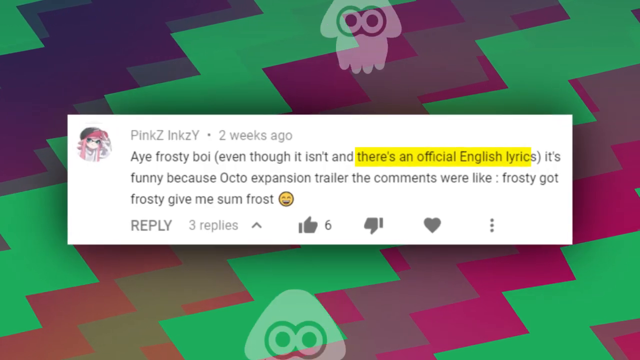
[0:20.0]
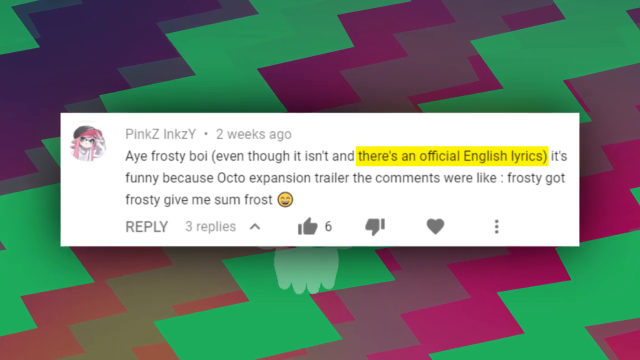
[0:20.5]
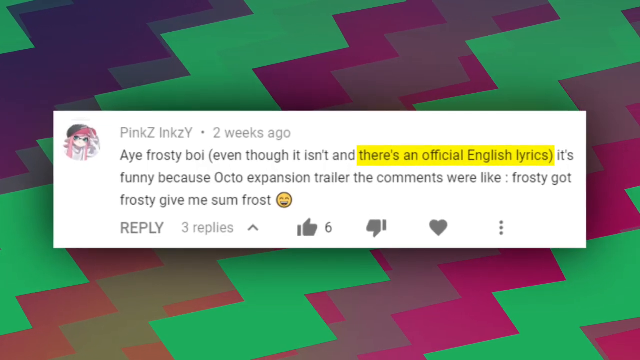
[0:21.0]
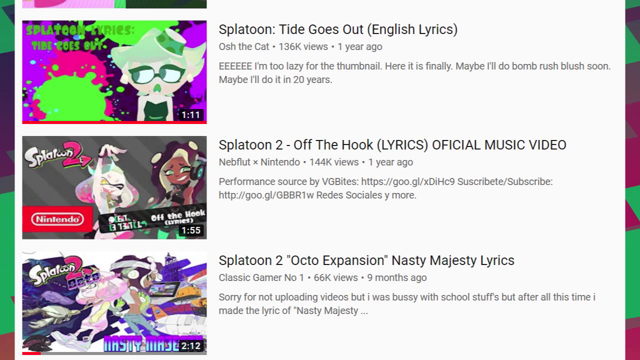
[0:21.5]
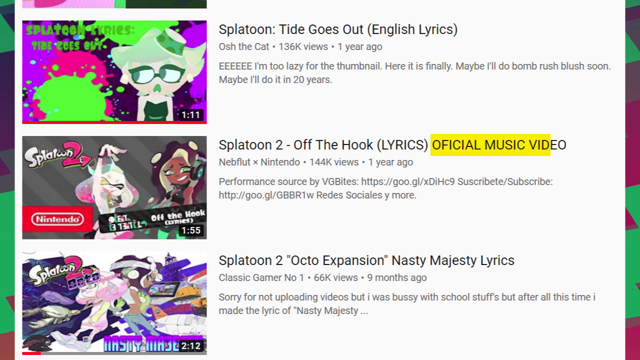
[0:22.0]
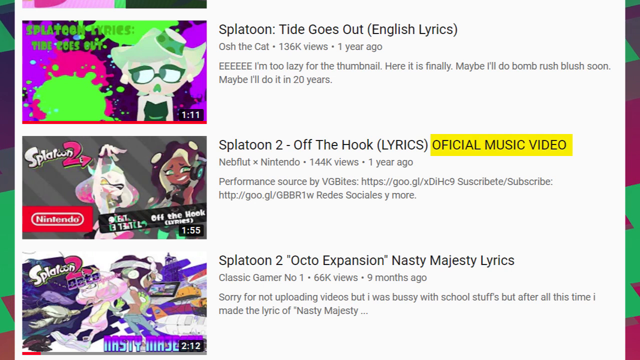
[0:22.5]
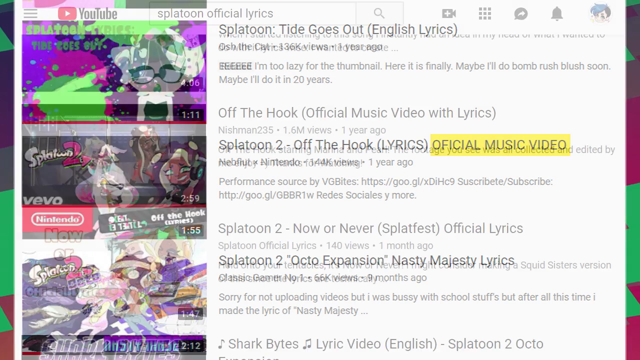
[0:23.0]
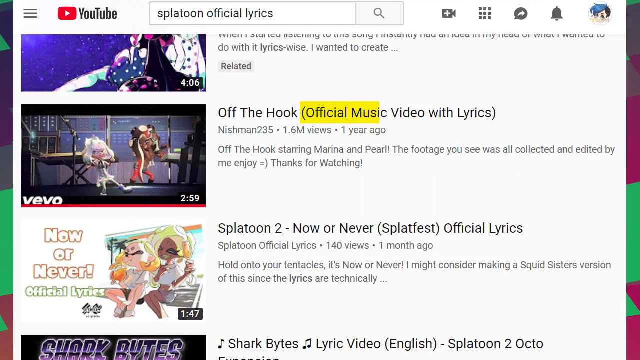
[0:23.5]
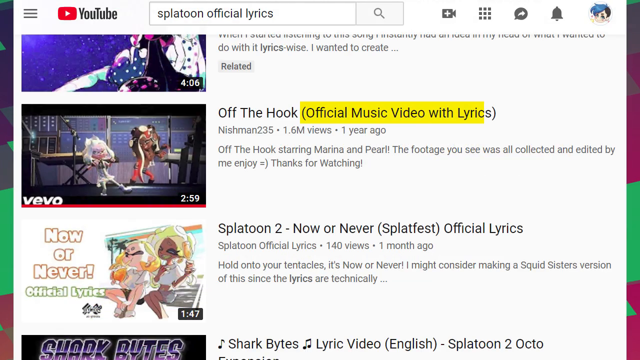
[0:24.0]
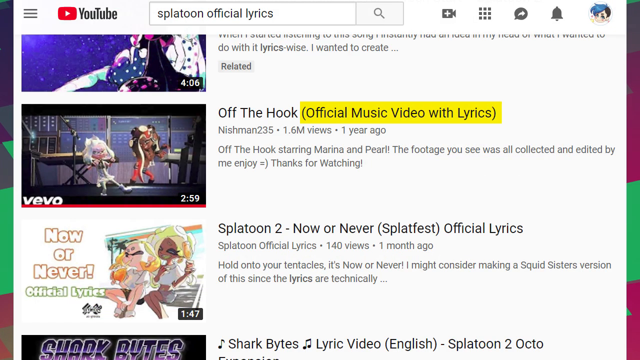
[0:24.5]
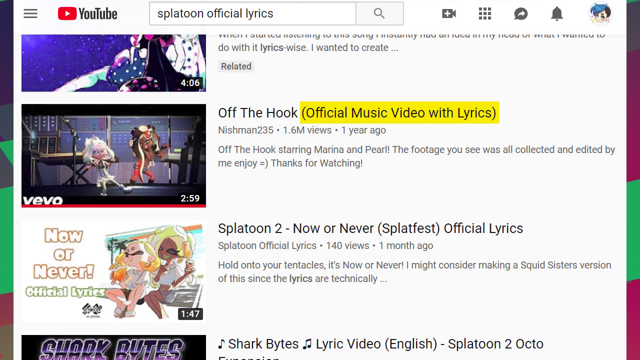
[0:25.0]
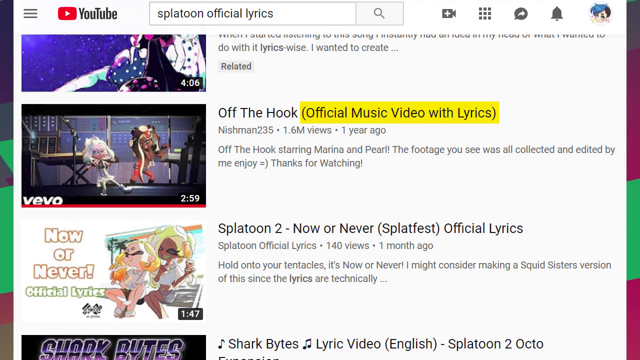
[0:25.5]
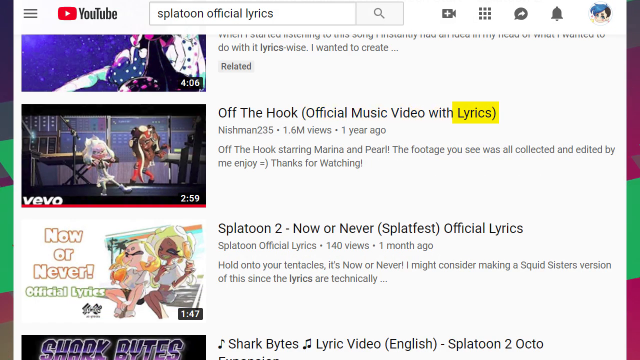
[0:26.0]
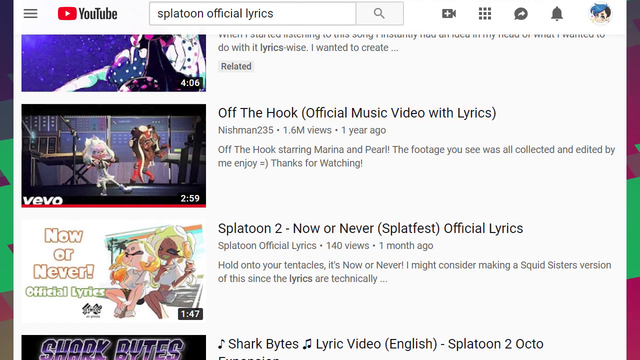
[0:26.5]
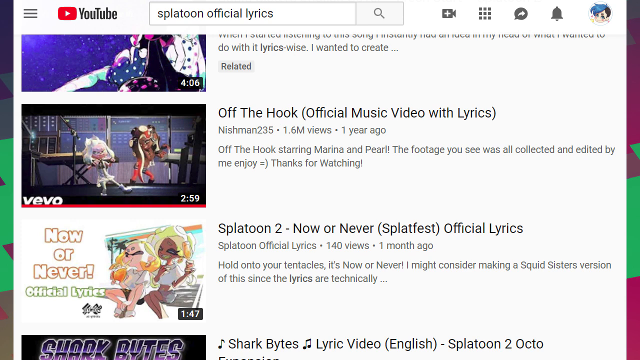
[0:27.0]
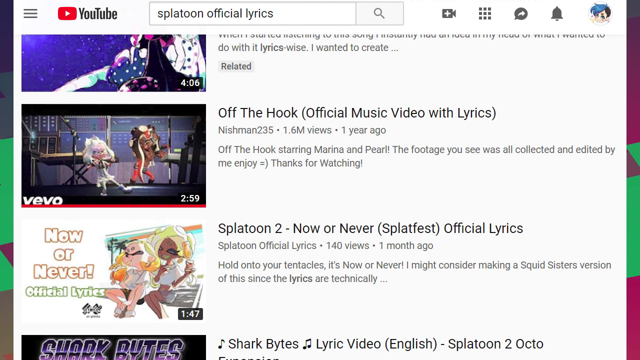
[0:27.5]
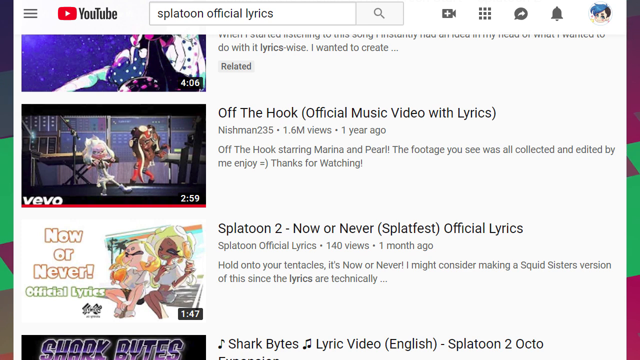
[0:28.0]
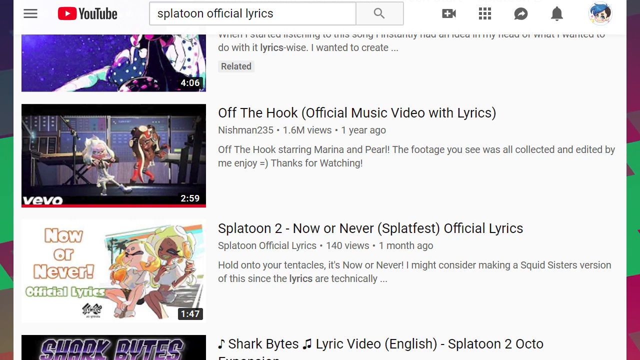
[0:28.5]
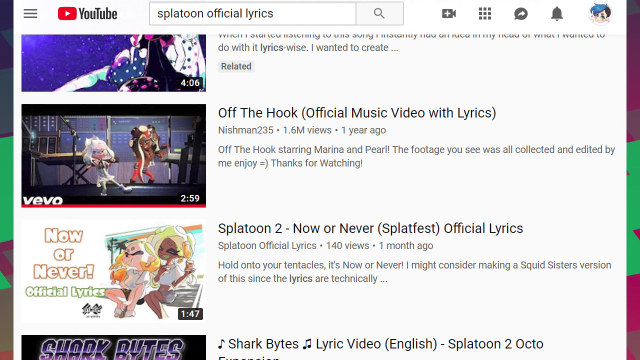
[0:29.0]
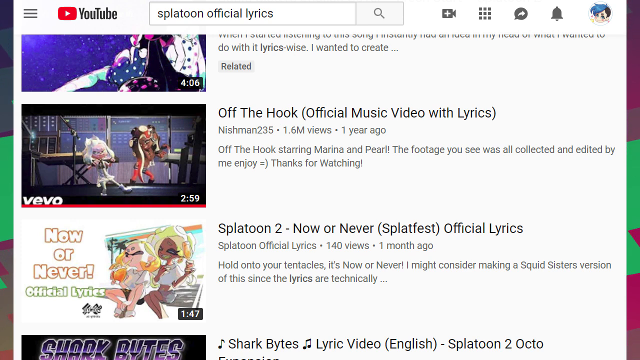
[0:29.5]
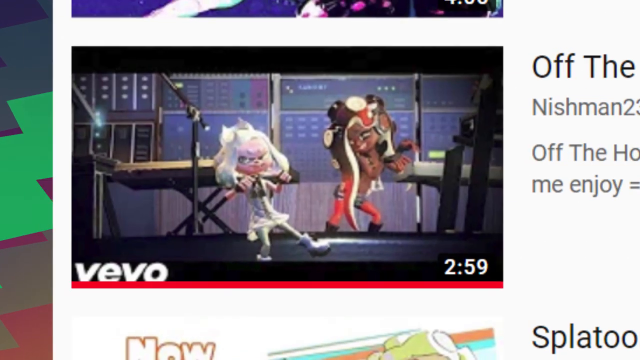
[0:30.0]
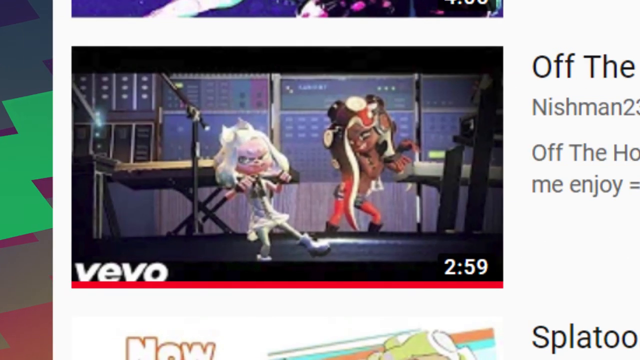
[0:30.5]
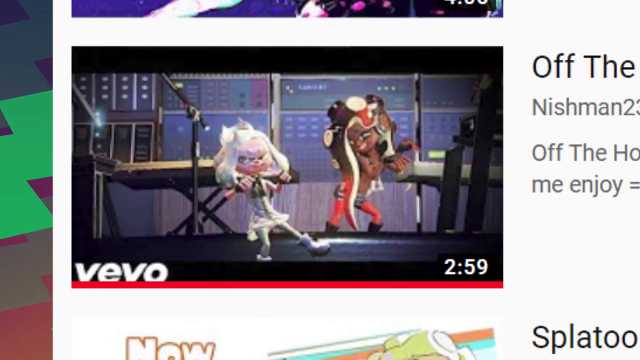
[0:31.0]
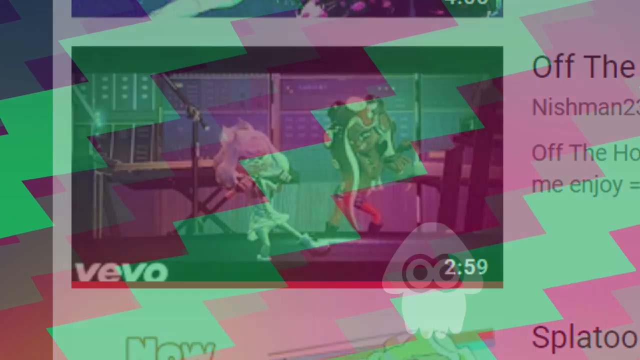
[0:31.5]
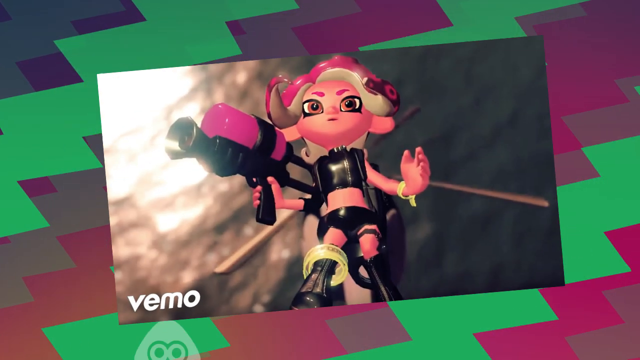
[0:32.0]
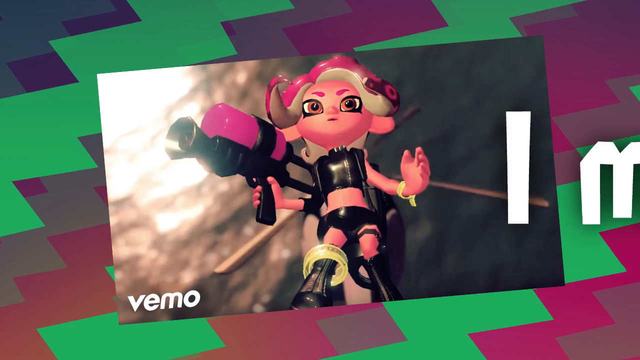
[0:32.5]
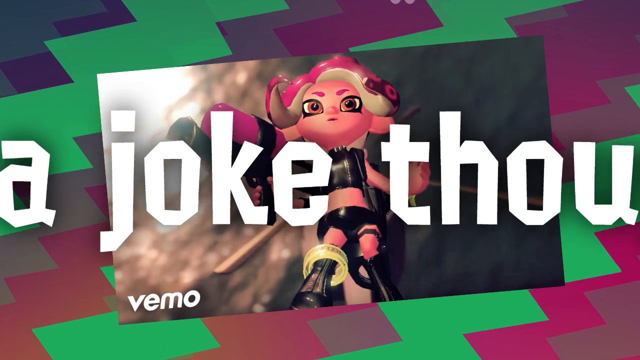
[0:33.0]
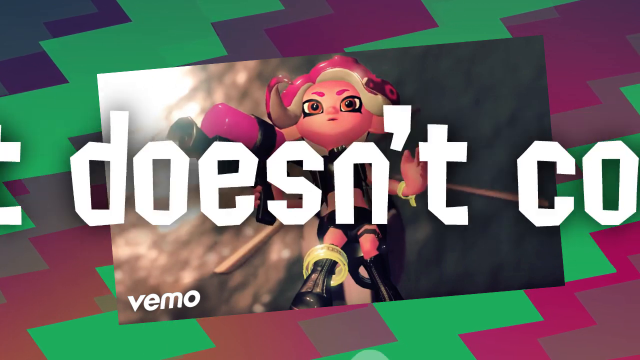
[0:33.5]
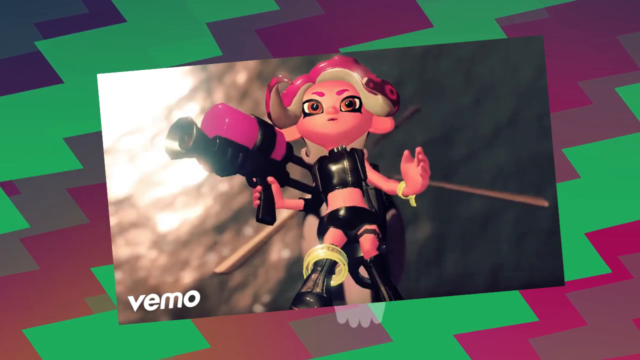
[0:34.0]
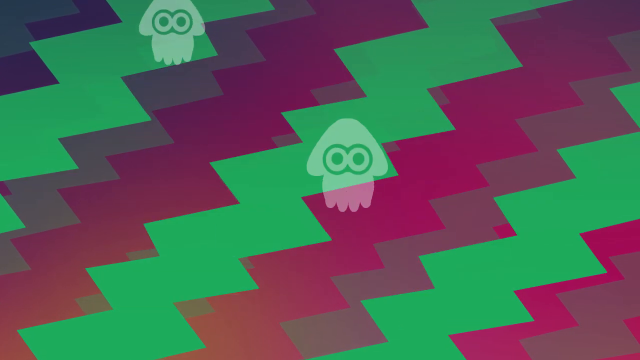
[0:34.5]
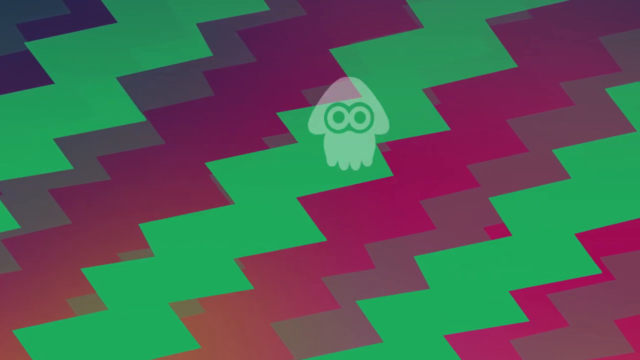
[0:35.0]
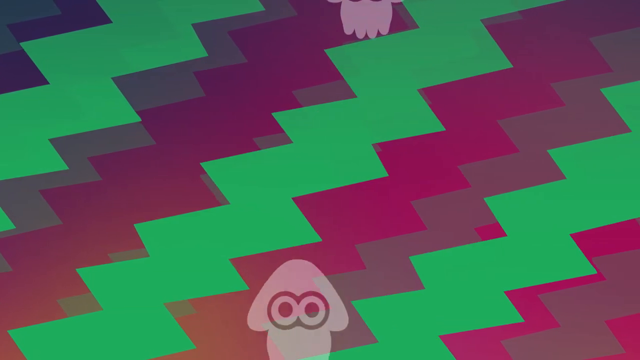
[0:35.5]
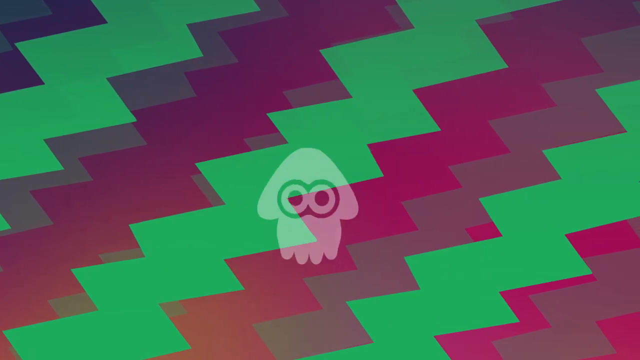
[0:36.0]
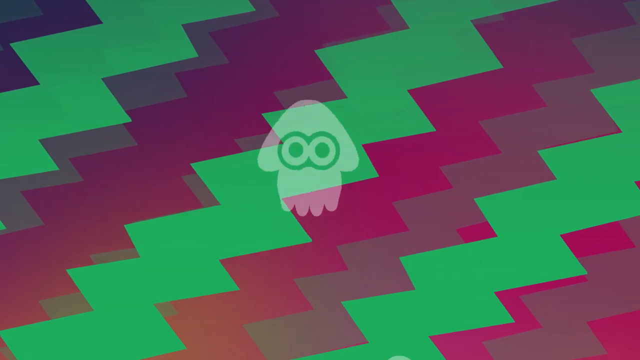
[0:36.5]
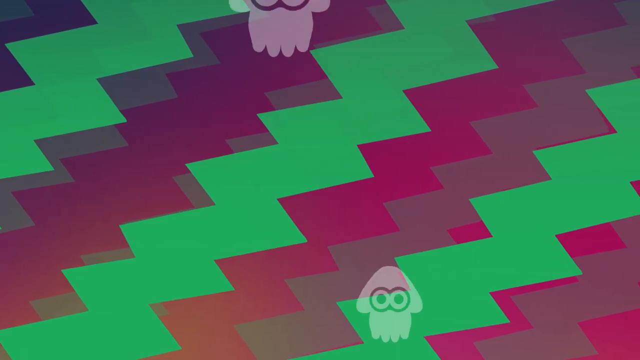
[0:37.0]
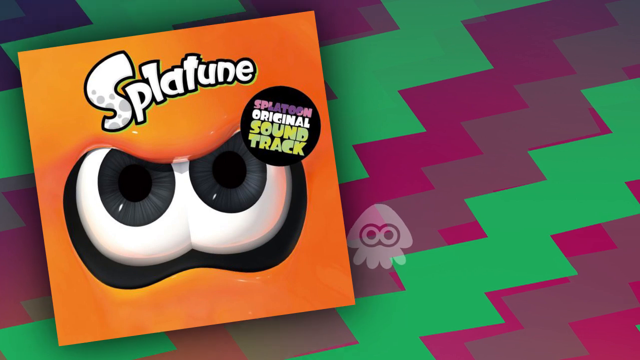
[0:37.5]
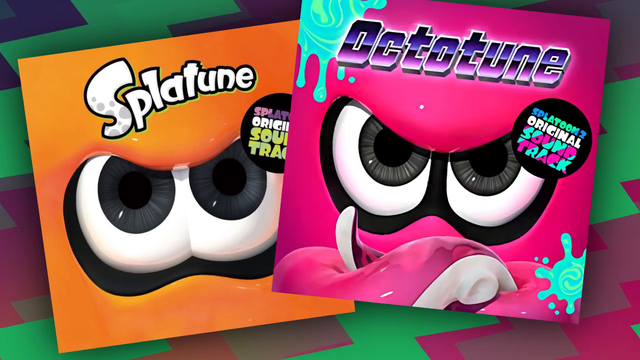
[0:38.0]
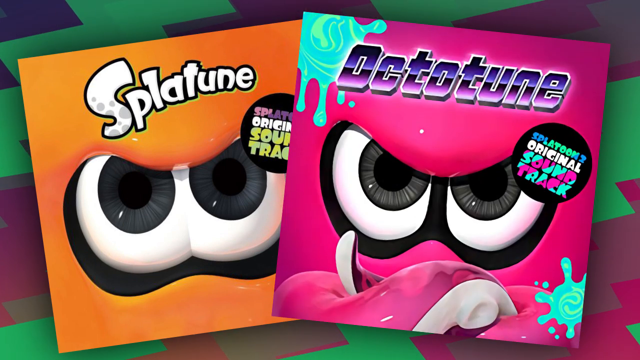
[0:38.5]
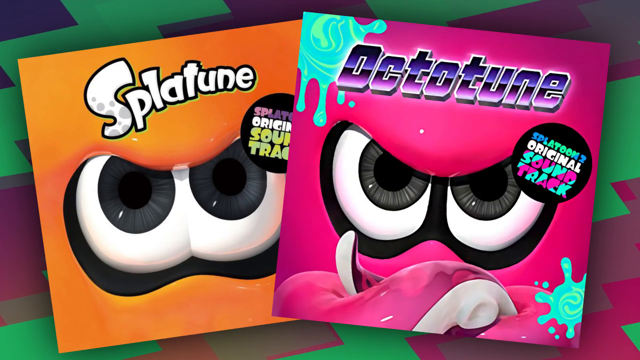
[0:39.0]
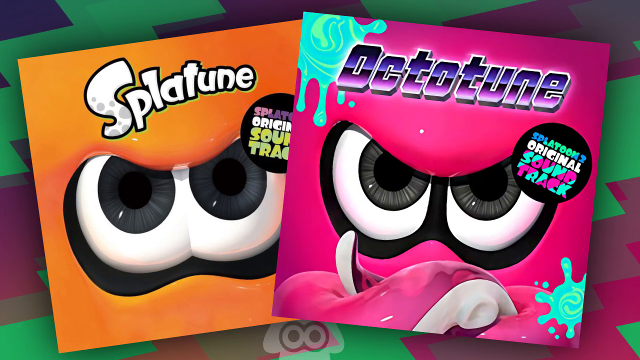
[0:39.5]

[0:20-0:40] More comments appear. One mentions that there is an official English release and says it is funny because of the expansion trailer, and other comments read something like "frosty god frosty give me some frost". Another comment says the language used in the series is vastly different from what is known. Thumbnails of many videos are visible, and the content is Japanese.